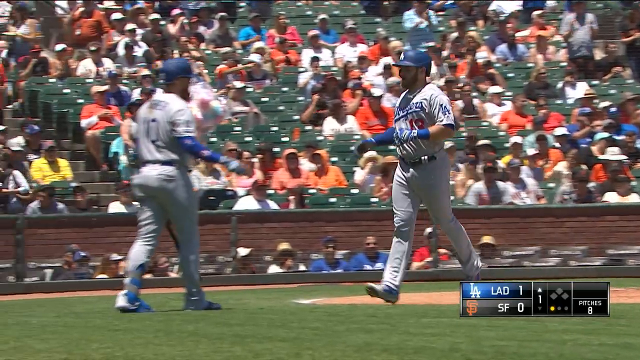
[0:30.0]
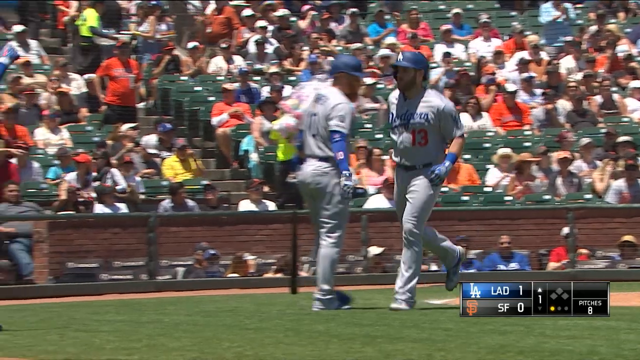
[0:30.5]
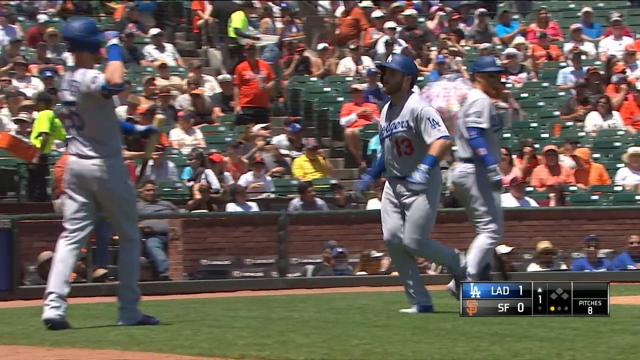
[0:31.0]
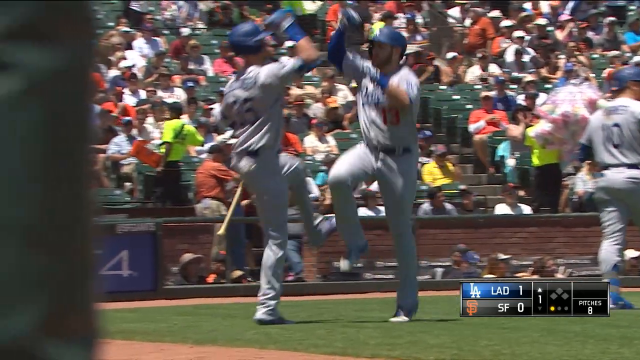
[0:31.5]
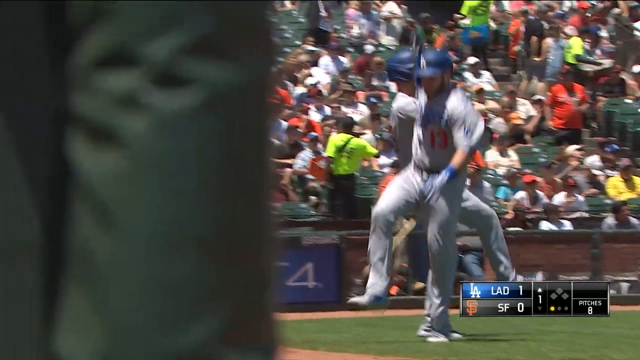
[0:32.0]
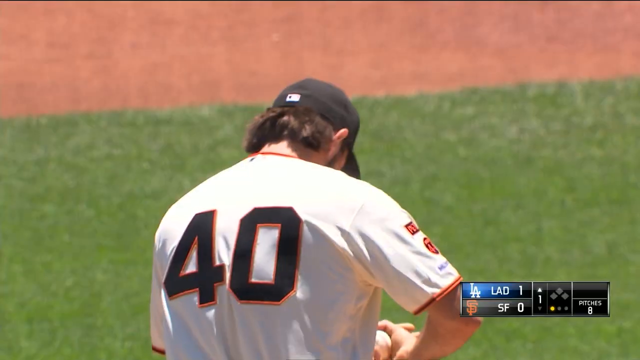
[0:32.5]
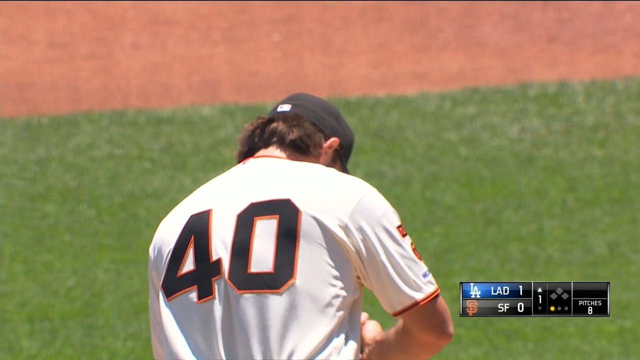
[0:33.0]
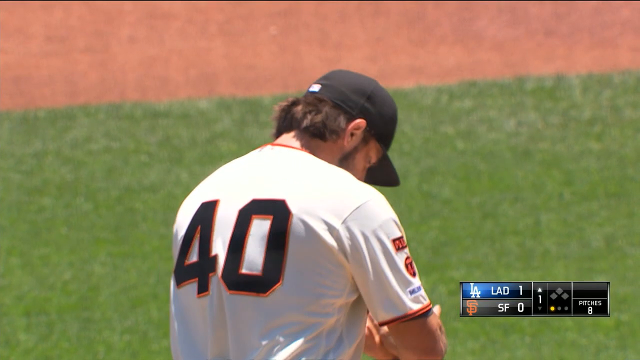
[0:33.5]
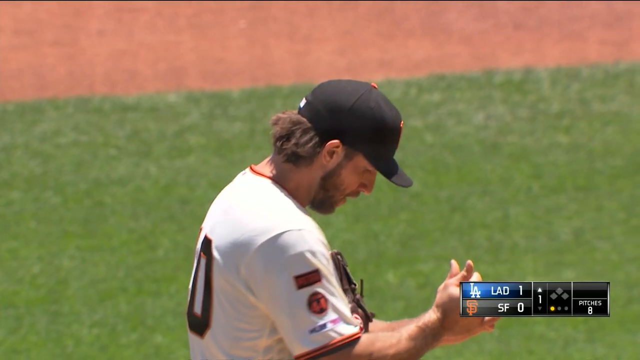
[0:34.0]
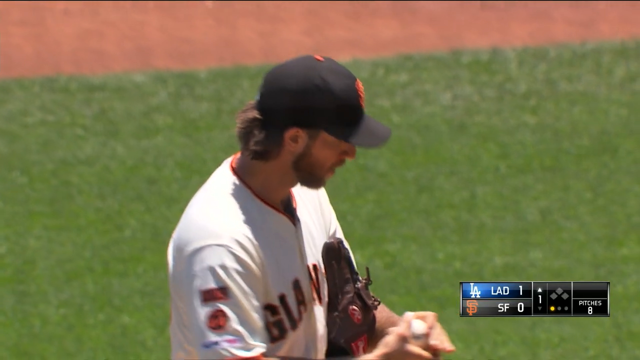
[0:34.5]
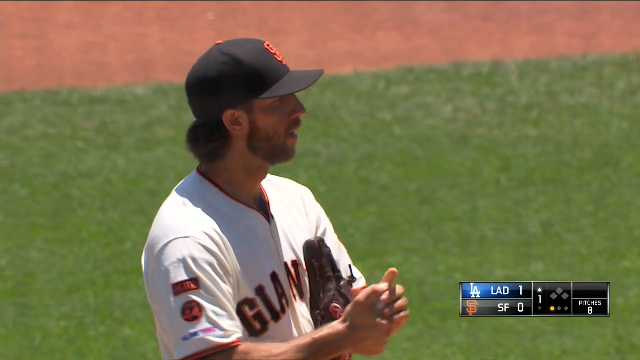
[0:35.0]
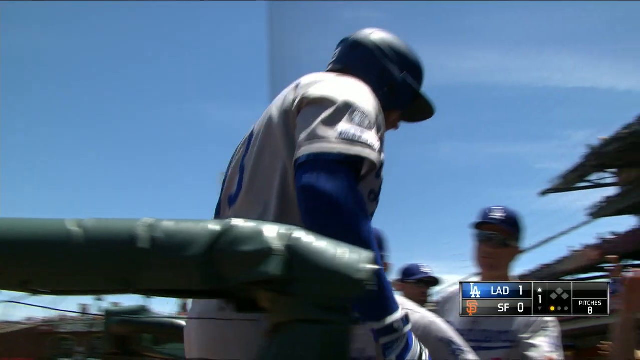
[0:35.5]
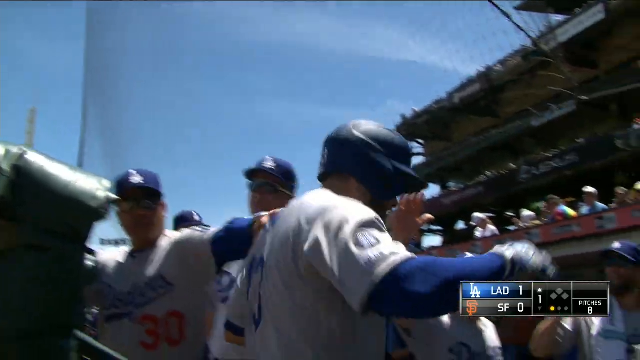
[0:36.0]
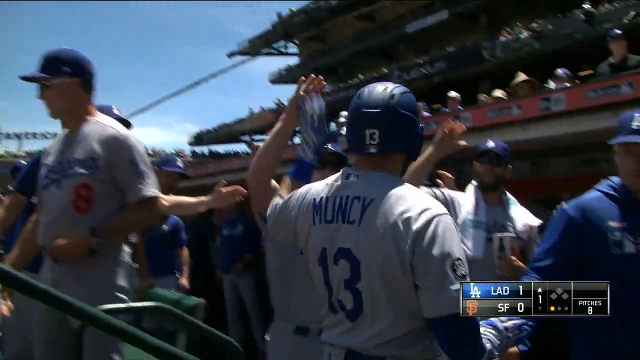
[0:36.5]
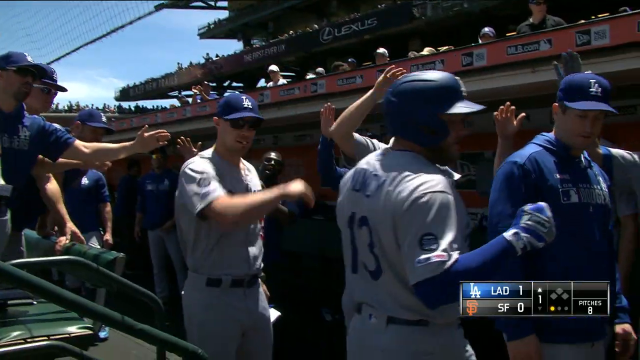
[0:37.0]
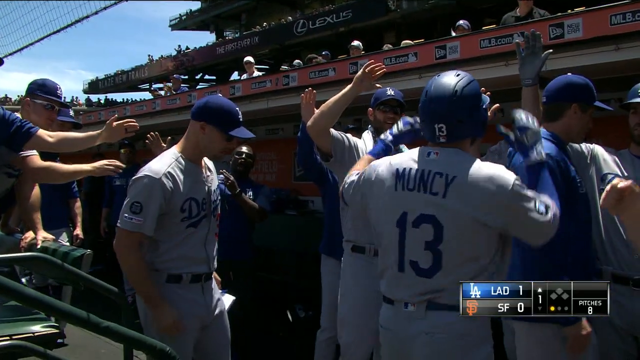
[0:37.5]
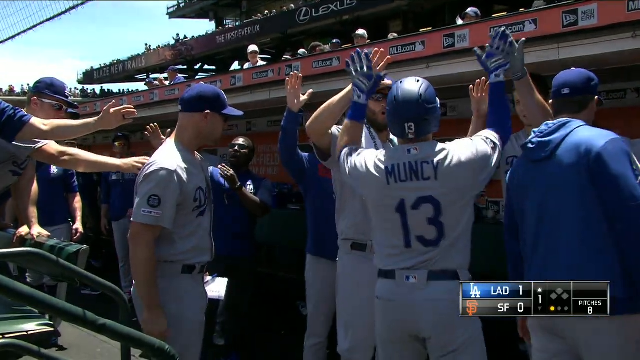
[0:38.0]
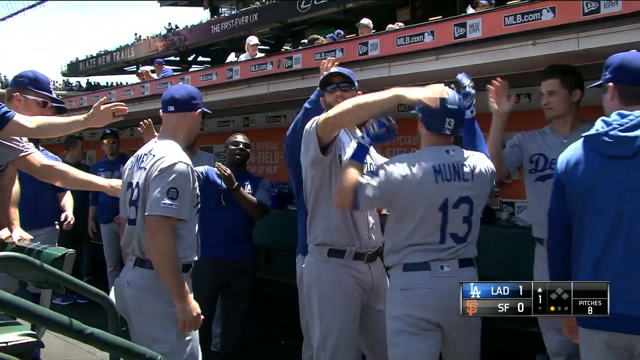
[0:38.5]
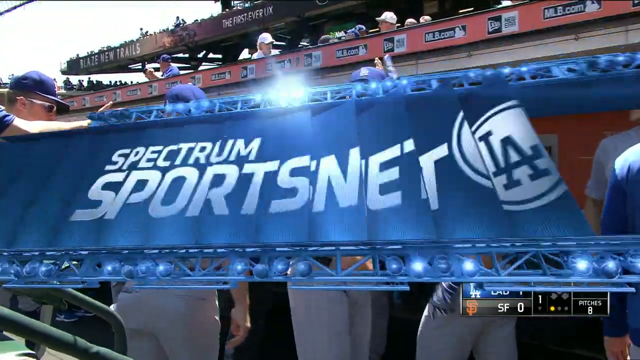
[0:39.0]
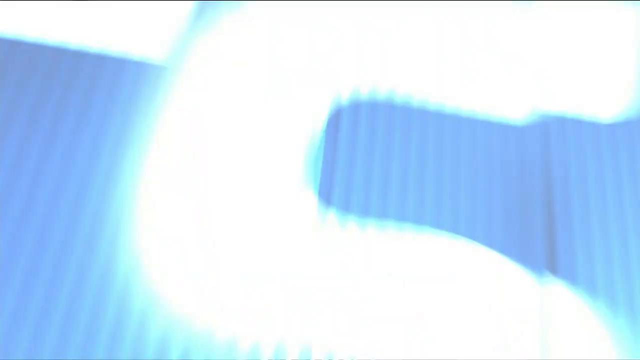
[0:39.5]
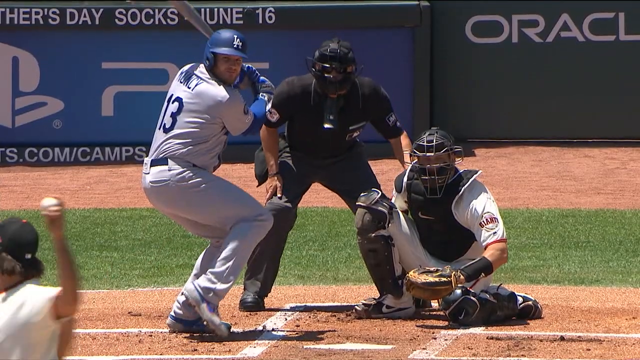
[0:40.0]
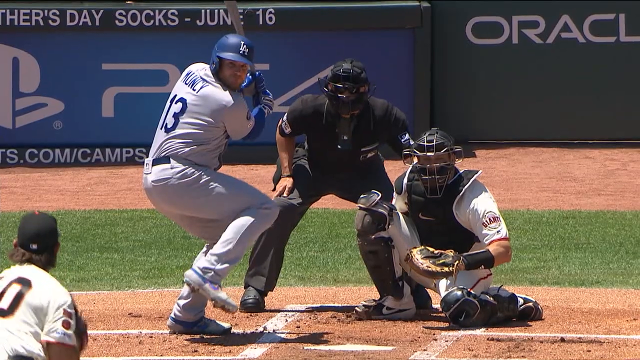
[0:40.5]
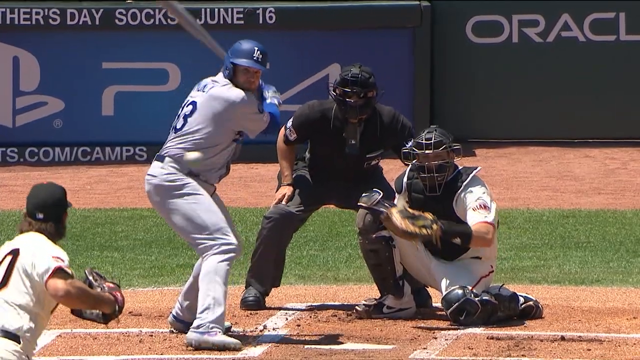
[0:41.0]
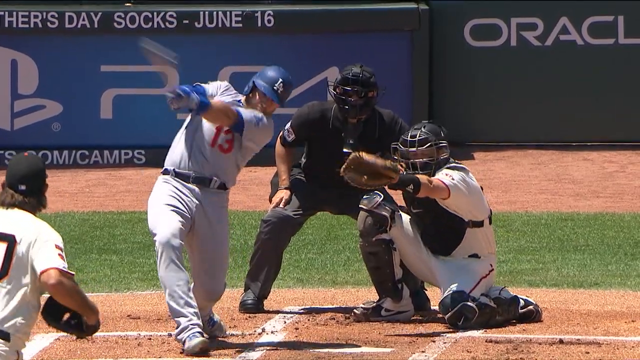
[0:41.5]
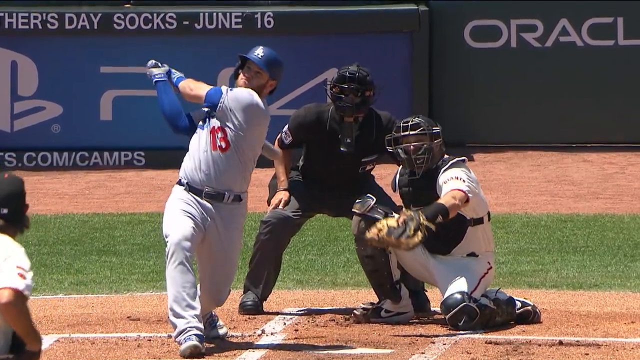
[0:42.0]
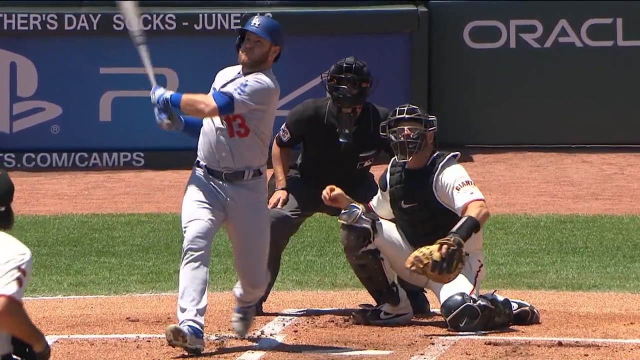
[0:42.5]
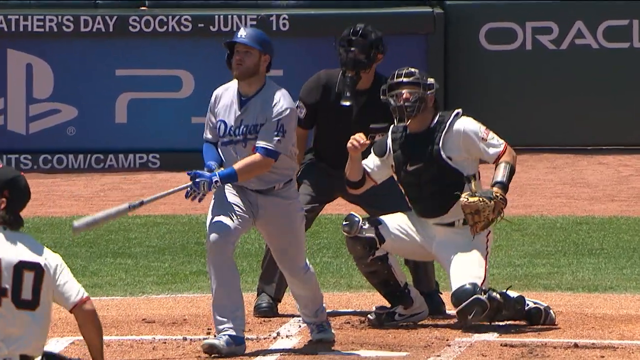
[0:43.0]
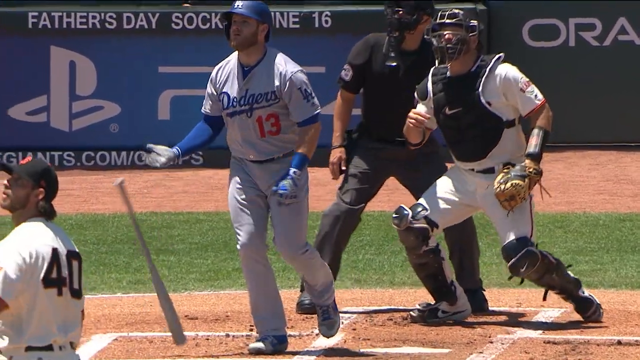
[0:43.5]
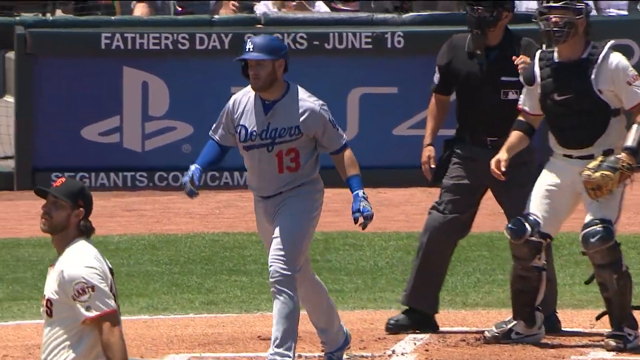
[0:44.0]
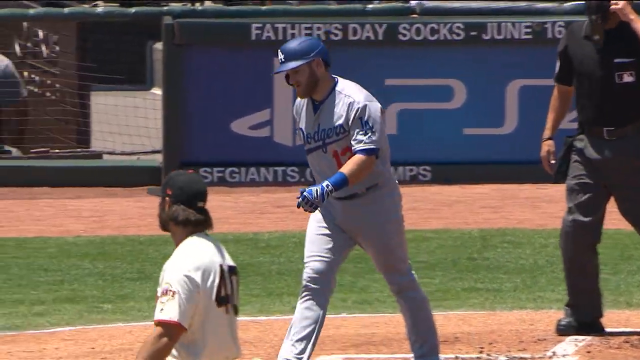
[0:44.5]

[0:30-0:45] The runner Max gives high-fives to the whole team as he goes back to the dugout. A new hitter seems to come up, though it may be a replay of his hit. Number 40 from San Francisco is on the pitcher's mound. Muncy hits the ball, with the umpire and the catcher behind him, then runs back into the dugout, high-fiving the whole team as they clap him on the back. A repeat of him getting the home run follows. The score at the bottom is still LA Dodgers 1, San Francisco 0. Number 40 of San Francisco is on the pitcher's mound throwing the ball and grabbing it with his hands, warming up.